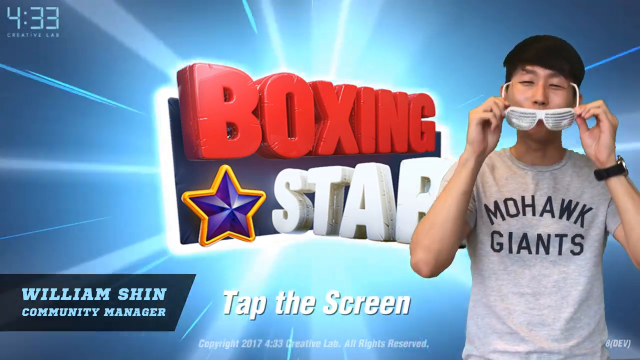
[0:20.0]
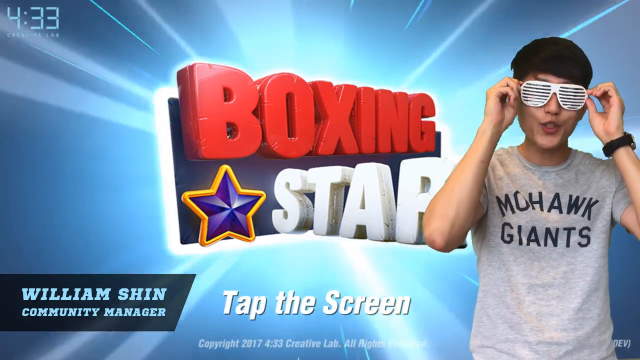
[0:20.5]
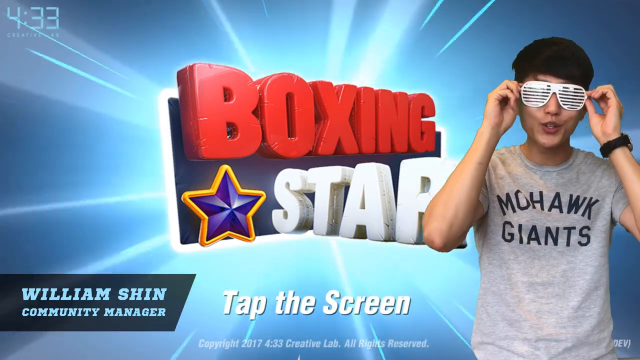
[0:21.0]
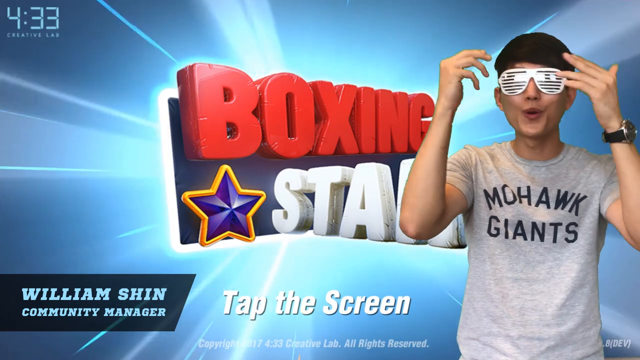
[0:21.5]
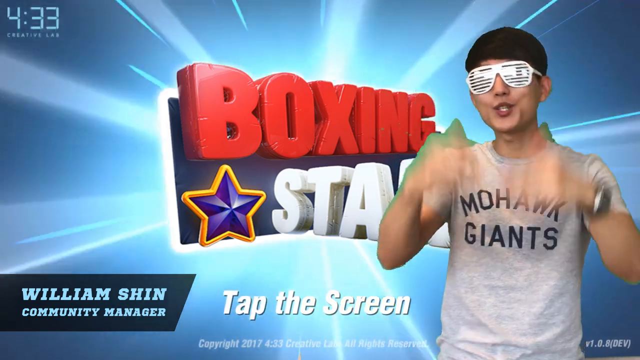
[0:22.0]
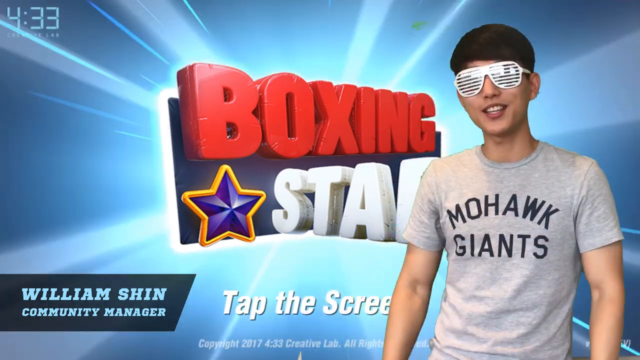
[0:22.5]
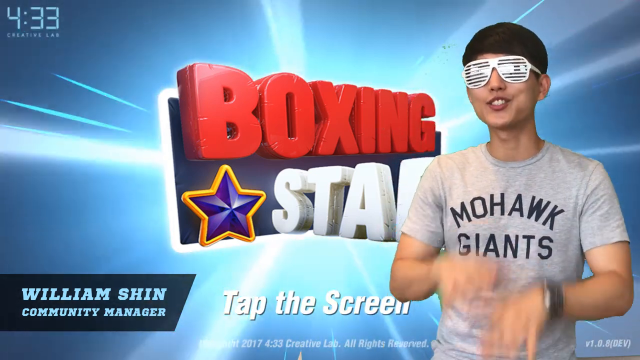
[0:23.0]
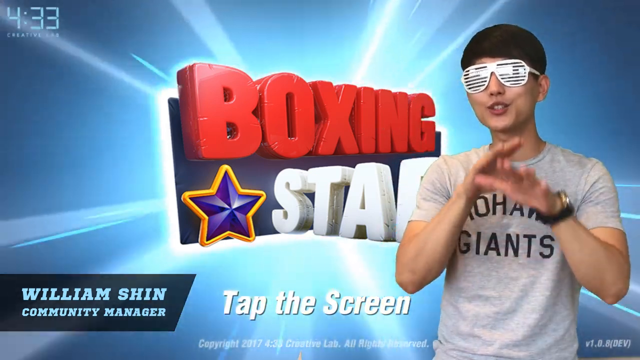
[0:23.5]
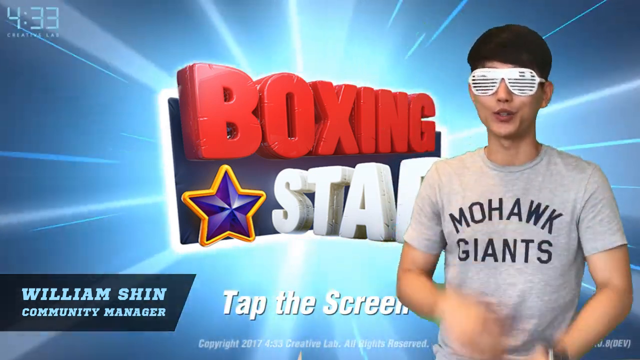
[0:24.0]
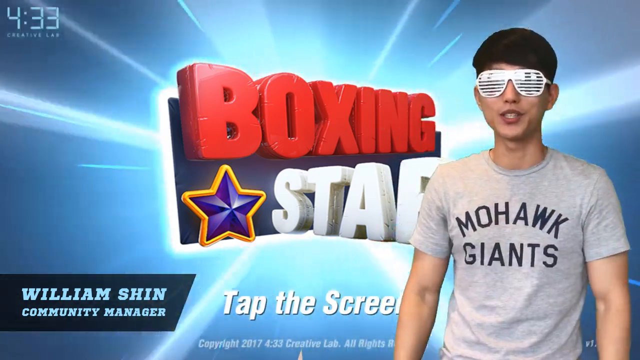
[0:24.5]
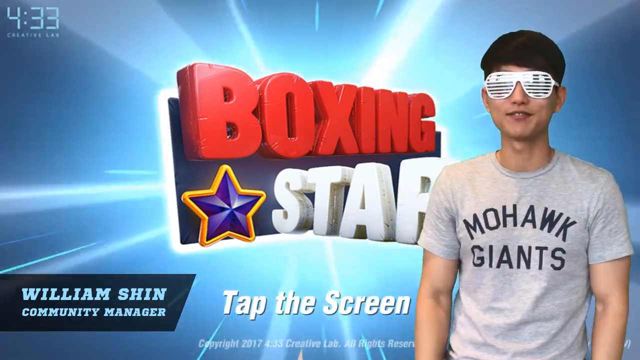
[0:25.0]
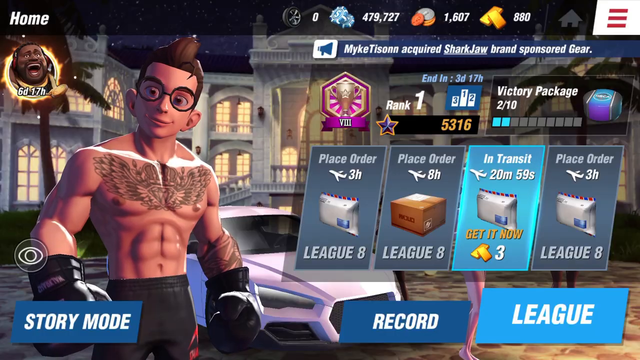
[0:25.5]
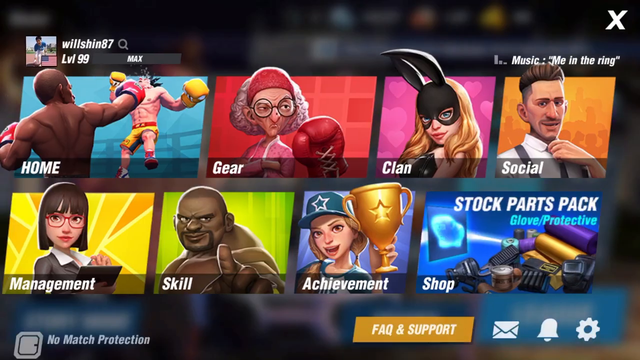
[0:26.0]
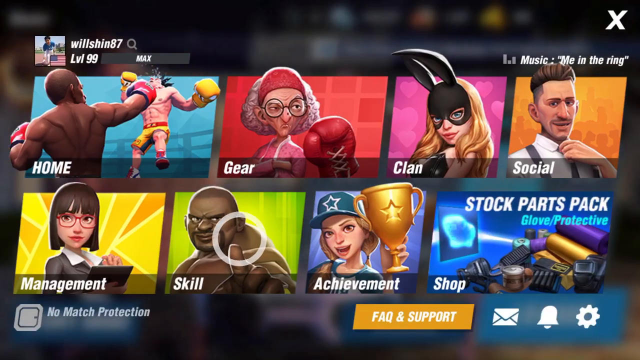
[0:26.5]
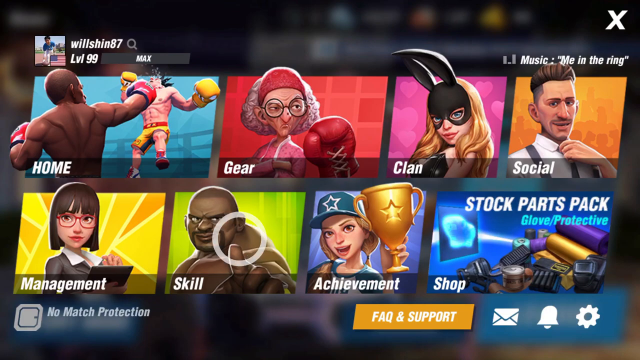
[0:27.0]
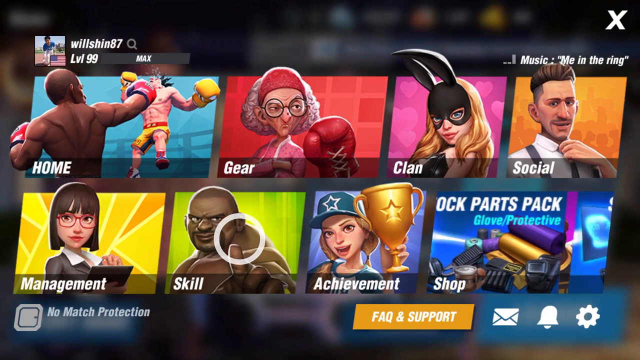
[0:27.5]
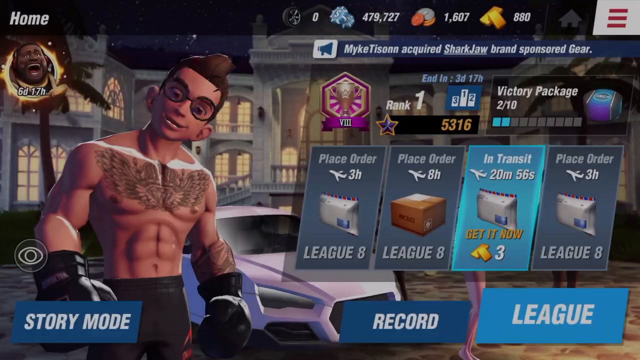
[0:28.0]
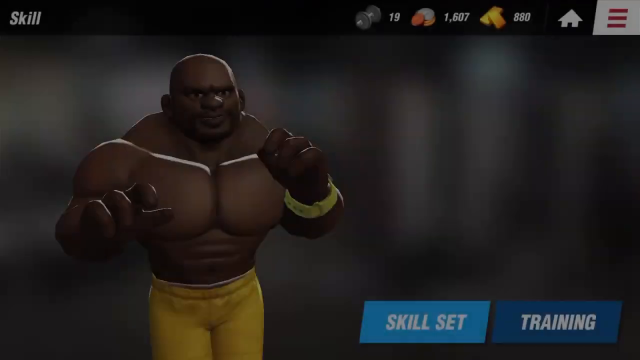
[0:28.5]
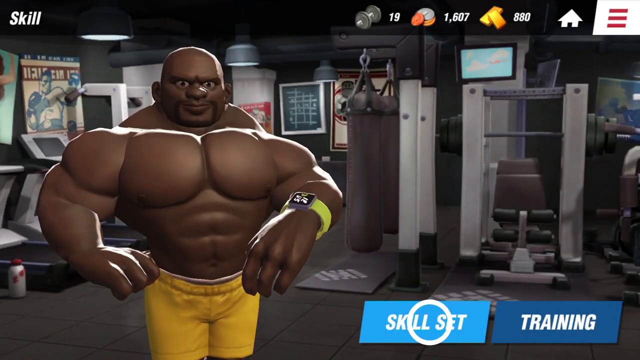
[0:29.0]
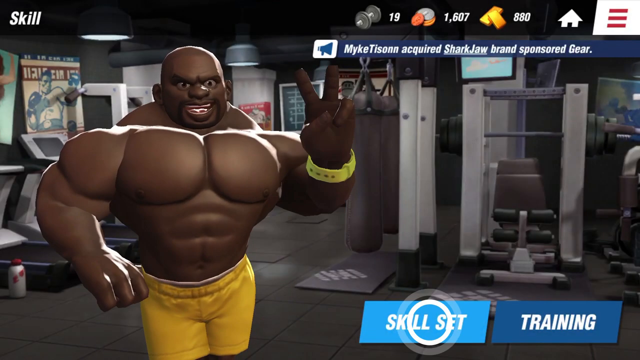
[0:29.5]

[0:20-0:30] William puts the glasses back on and holds his hands out toward the screen, then places his hands one on top of the other in an almost yo-yo-like gesture. He seems to be a young man. The video cuts to the menu of a computer game that seems to be about boxing, judging by the images. The username is "willshin87" at level 99. A series of images appears: "home" shows someone knocking out somebody else; "gear" shows an older lady with glasses and a boxing glove; "clan" shows a girl dressed as a sort of bunny girl with a black half mask; "social" shows a gentleman with a tie and braces. Text indicates that the music playing is "me in the ring". "Management" shows someone standing with something like an iPad; "skill" shows a person pointing at the screen with a circle around it; "achievement" shows somebody in a baseball hat holding up a trophy; and "stock parts pack" reads "glove / protective". Below is a yellow button reading "FAQ and support", followed by an envelope, a bell and a cog icon. The video cuts briefly to another screen, too quickly to read, and then to the Skill page.